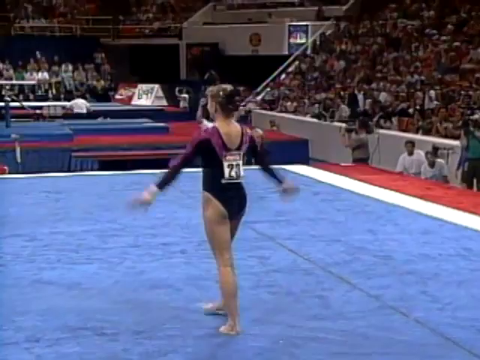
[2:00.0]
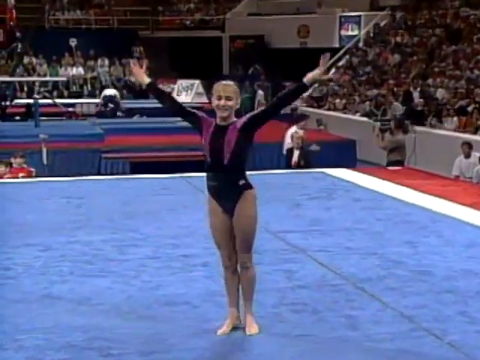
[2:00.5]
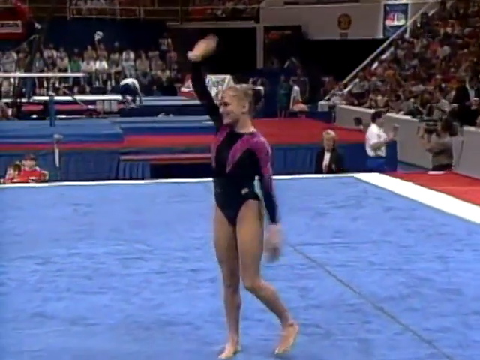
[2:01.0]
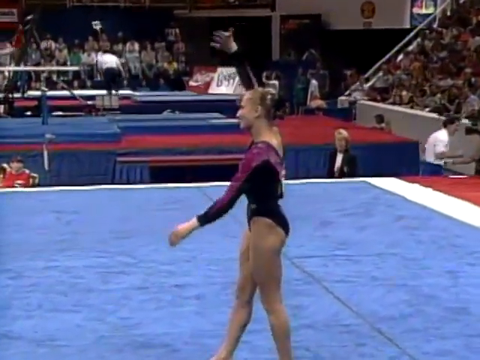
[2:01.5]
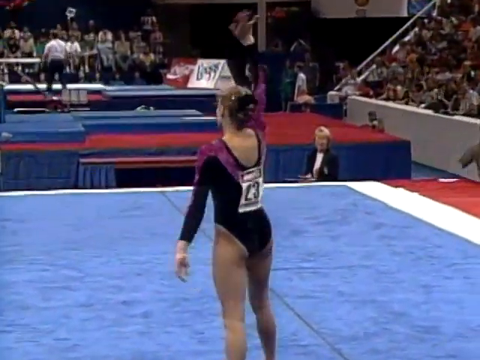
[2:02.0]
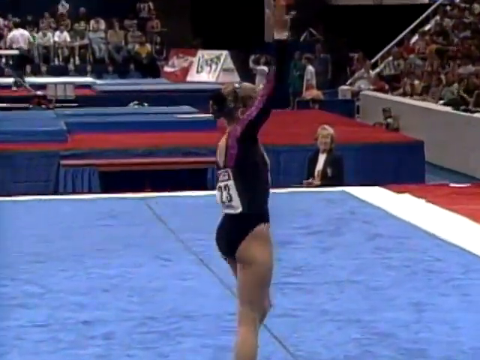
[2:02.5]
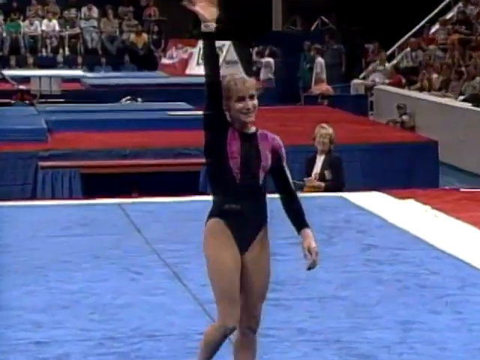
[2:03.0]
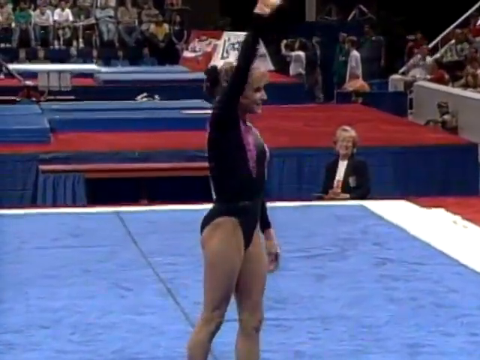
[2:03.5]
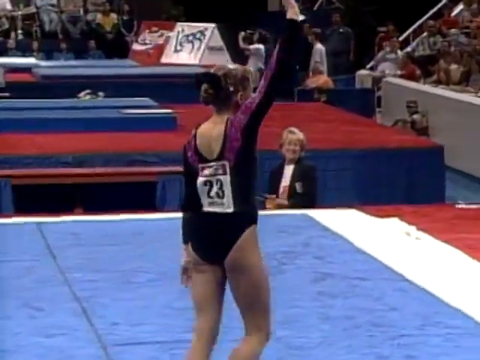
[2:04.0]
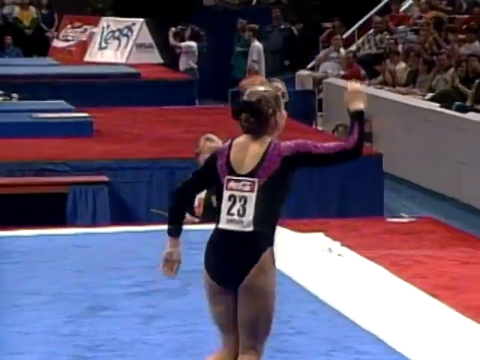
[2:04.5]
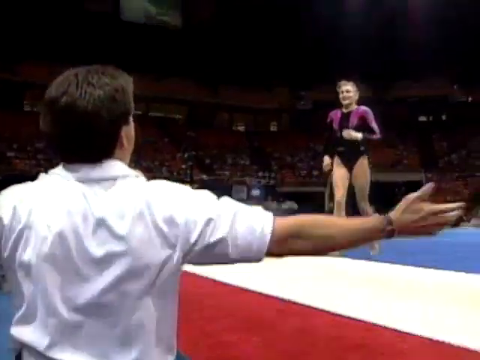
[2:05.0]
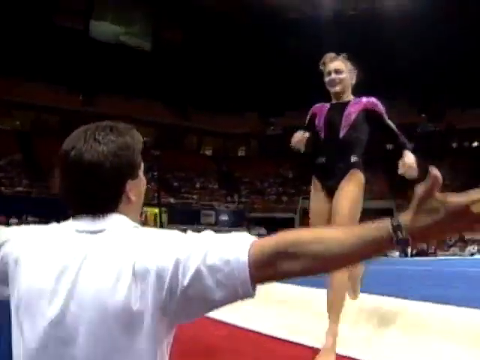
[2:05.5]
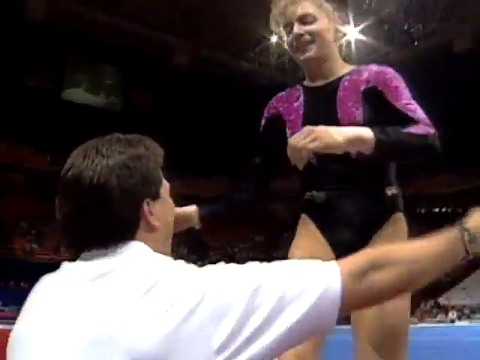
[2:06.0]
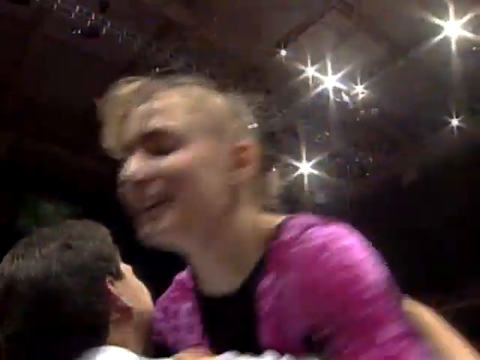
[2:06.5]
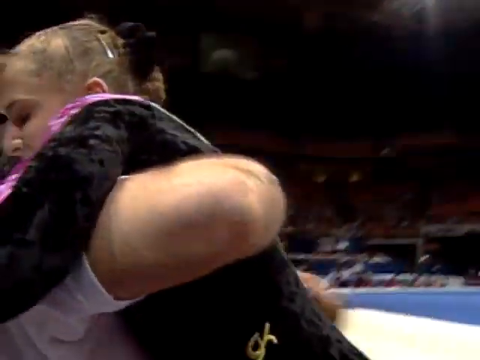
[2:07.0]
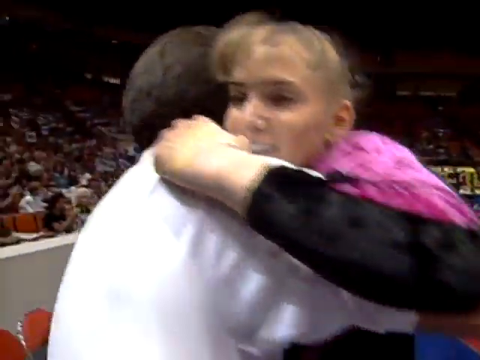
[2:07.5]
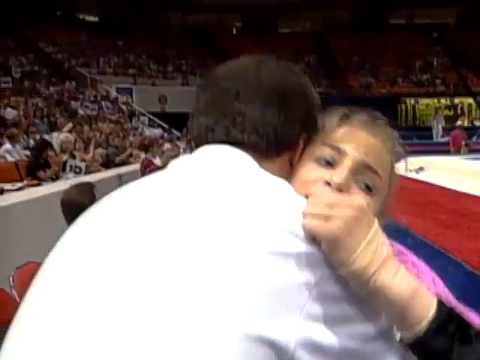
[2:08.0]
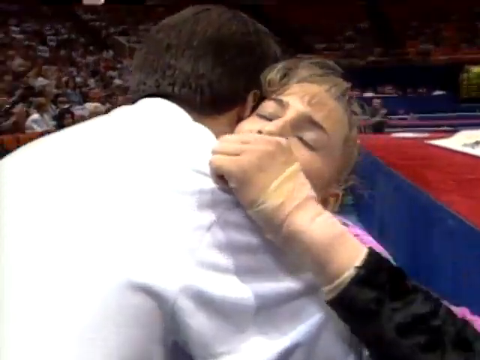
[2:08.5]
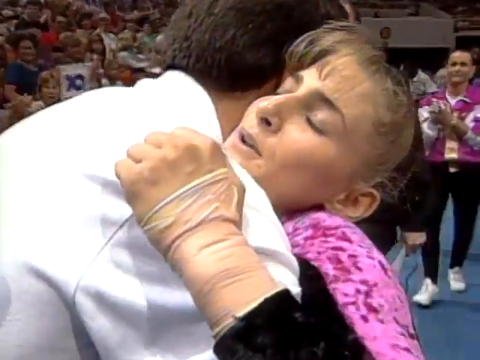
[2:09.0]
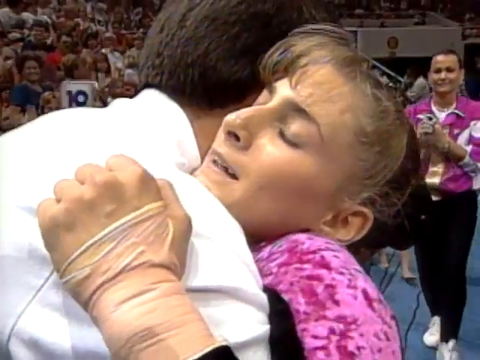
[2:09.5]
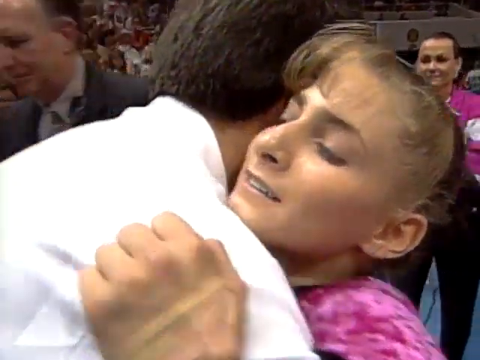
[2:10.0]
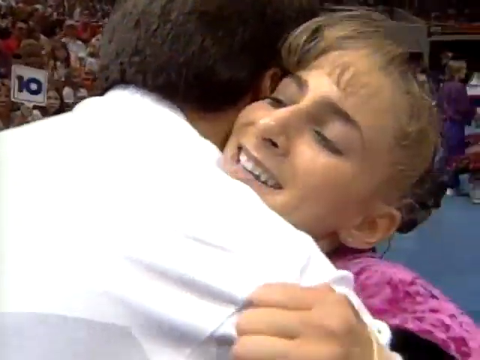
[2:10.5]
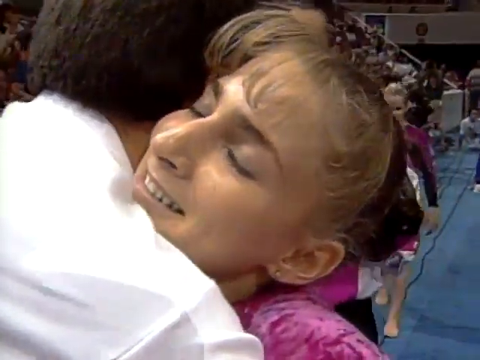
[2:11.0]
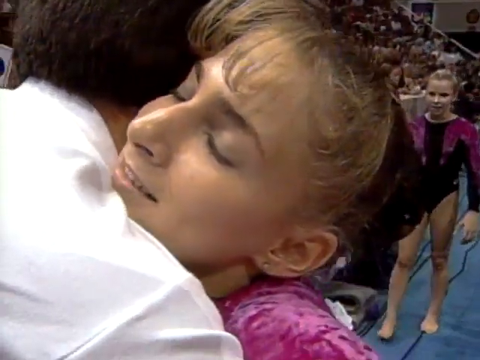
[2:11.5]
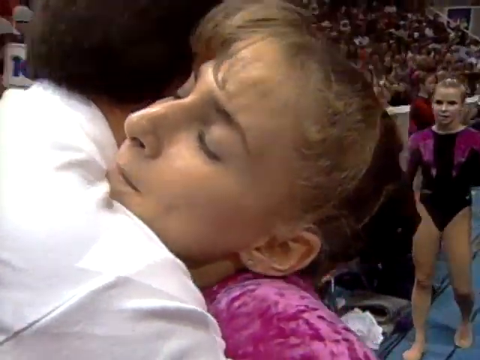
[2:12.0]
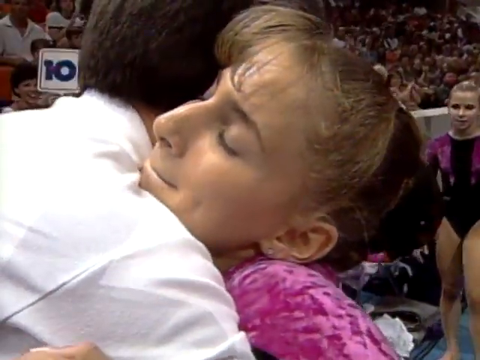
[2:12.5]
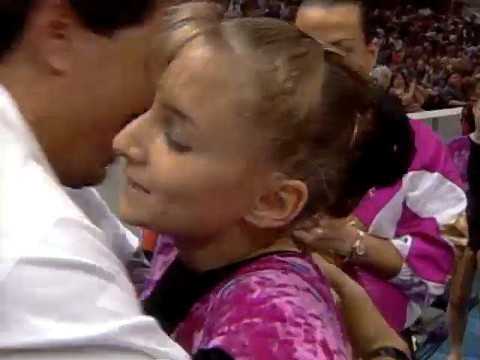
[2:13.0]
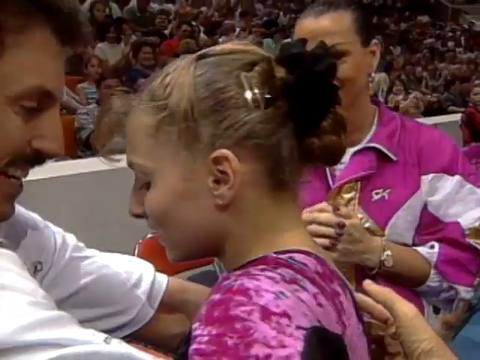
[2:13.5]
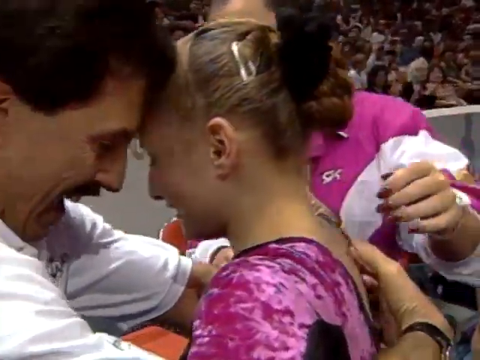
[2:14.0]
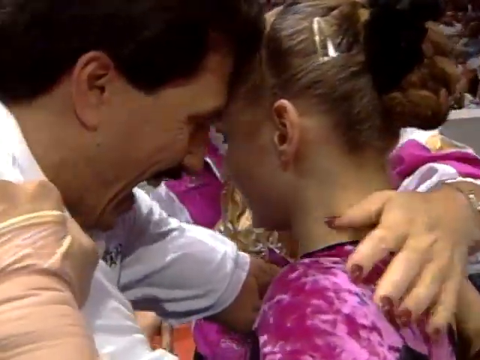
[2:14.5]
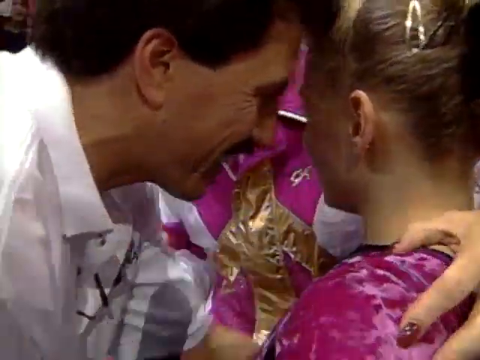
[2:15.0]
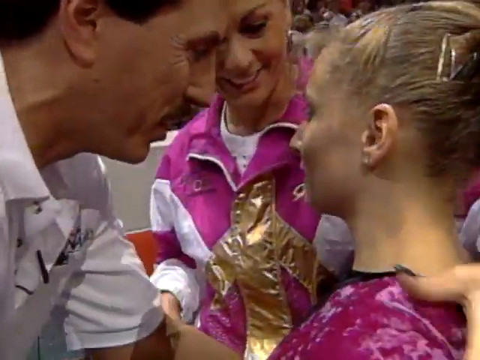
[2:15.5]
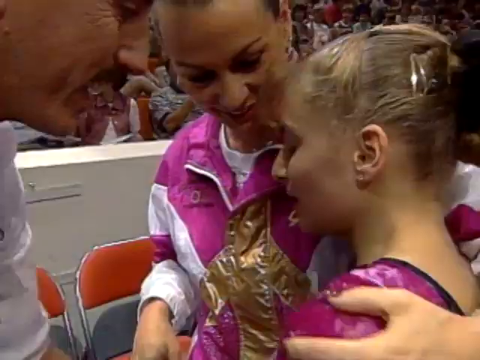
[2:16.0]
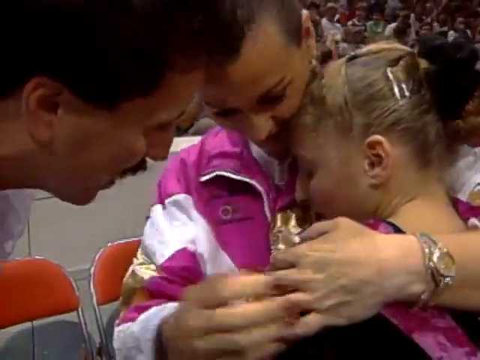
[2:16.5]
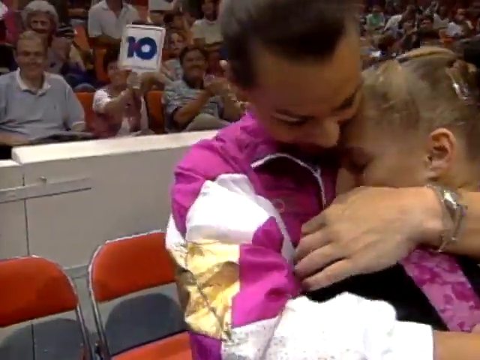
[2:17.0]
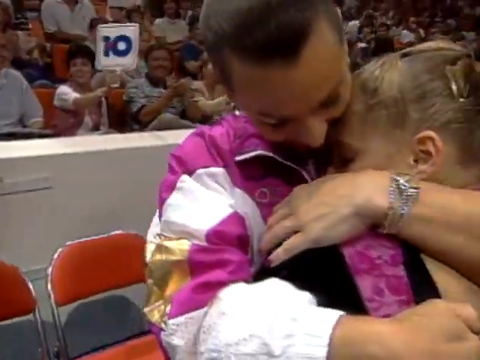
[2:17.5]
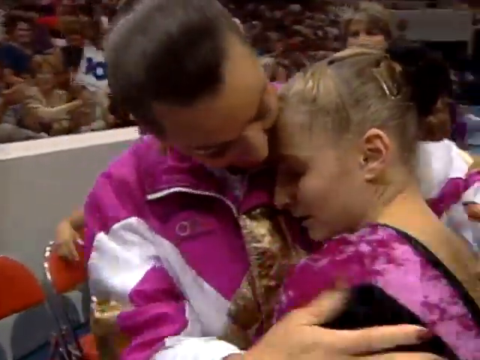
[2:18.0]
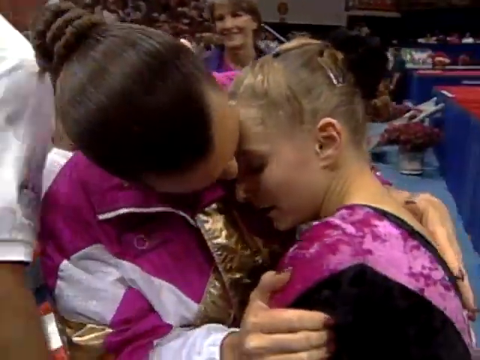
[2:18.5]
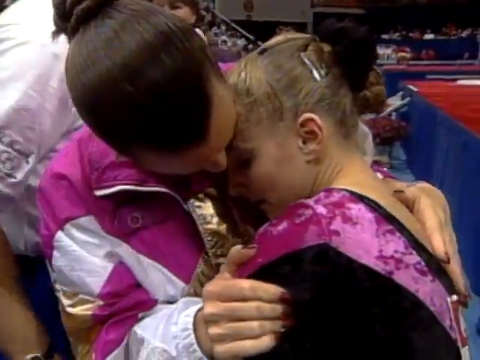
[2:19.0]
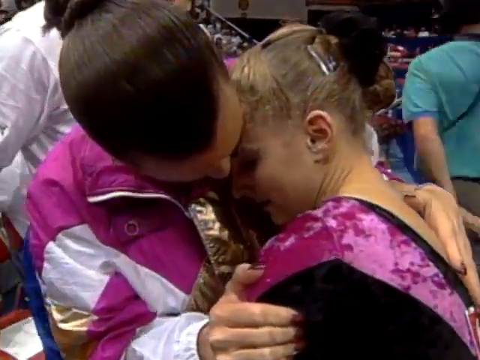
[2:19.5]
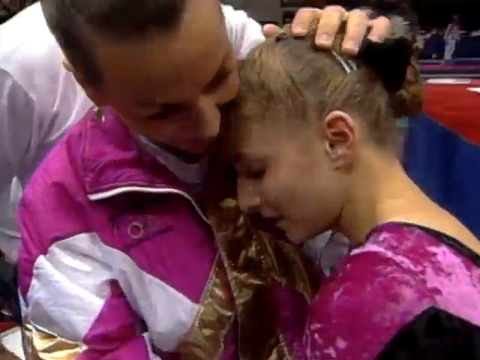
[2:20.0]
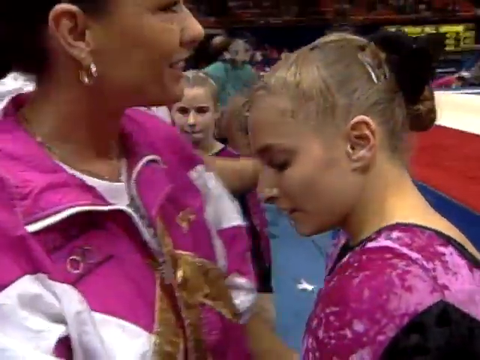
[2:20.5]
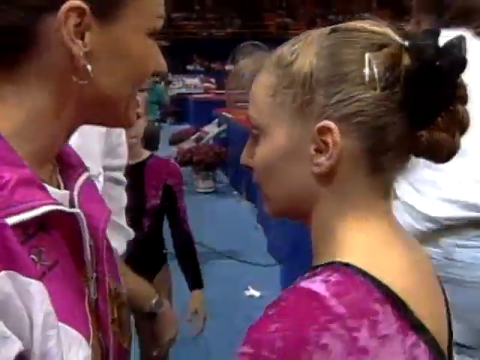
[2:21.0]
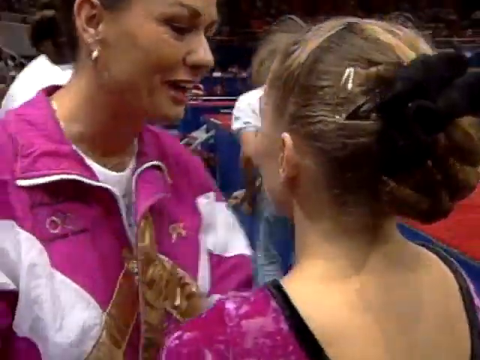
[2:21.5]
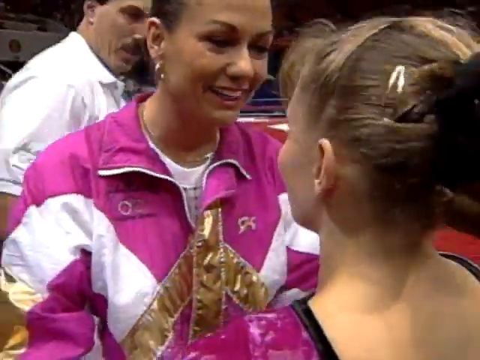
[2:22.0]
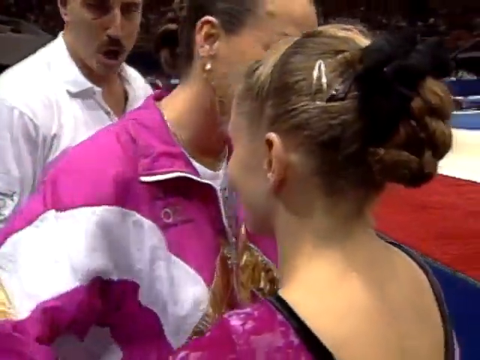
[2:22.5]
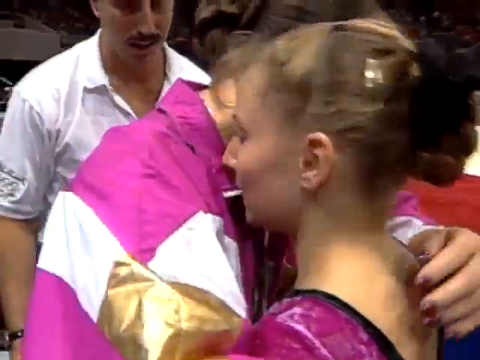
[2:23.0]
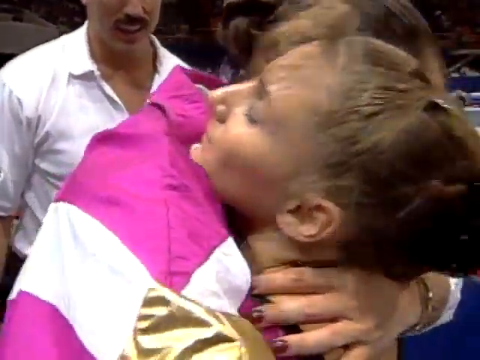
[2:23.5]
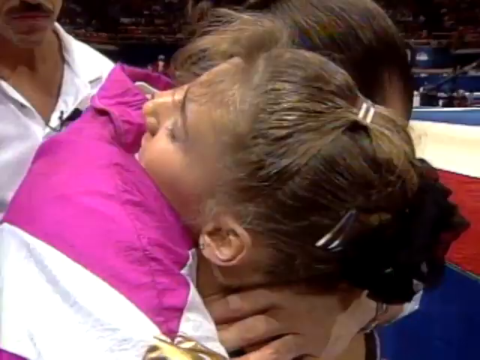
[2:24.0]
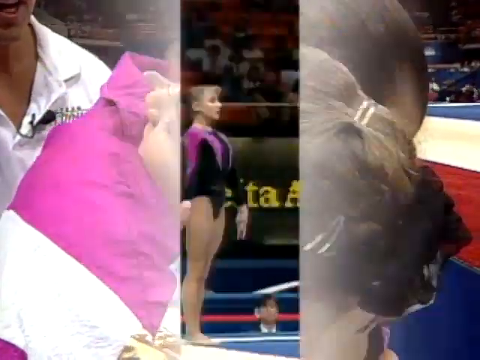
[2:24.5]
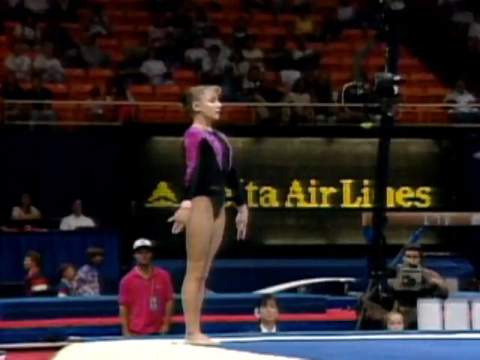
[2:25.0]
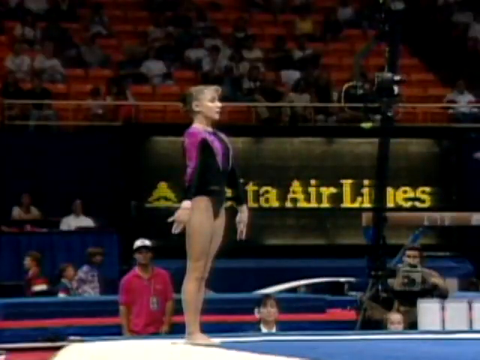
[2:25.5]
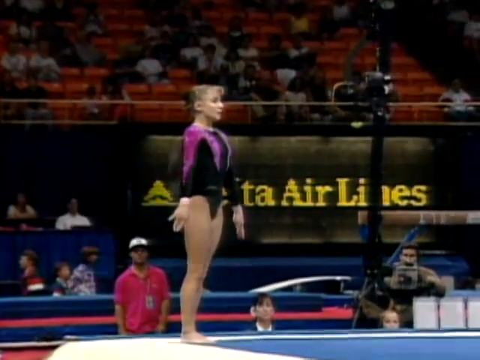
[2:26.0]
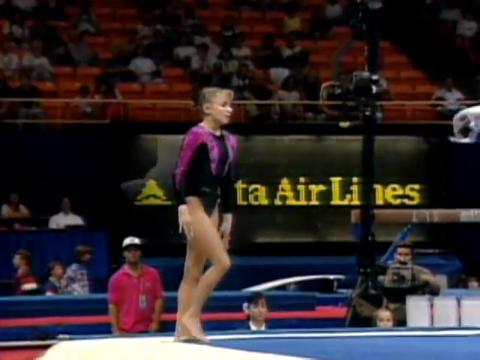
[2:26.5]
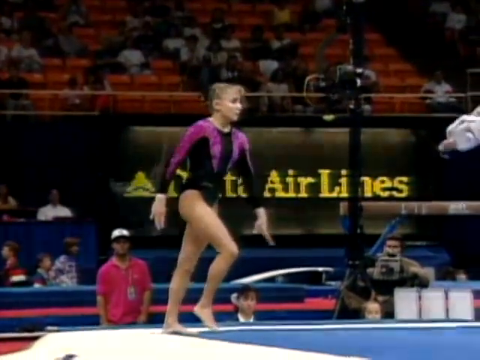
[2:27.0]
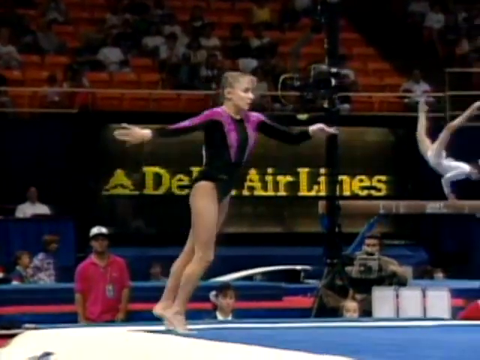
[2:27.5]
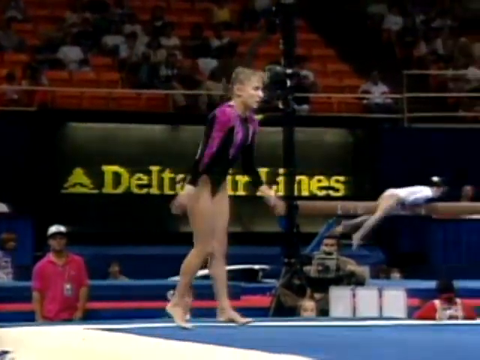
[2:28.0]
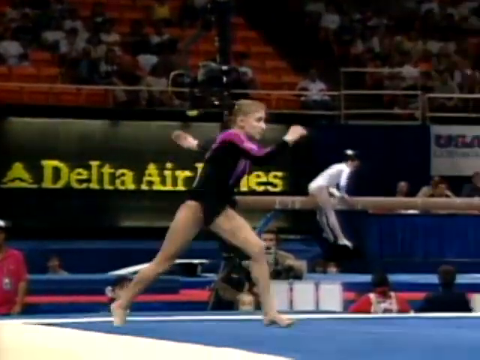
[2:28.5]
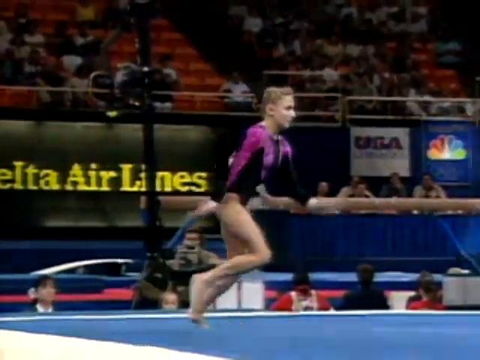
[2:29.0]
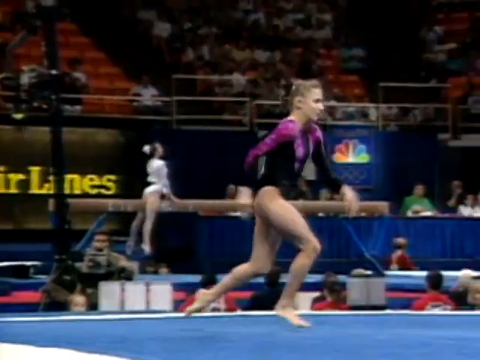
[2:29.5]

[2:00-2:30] A gymnast performs at a big gymnastics event. The NBC logo is on one of the exits, and the Coca-Cola and Legs logos are visible. The stands are full of people. The view is of the gymnast's back as she stands on the large blue mat with its thick white outline. It looks like she has just finished a routine, and she waves to the crowd. She wears a black leotard with some purple at the top, and her hair is tied up; it looks light brown, maybe dark blonde. She waves as she runs off the mat, the number 23 on her. She appears to hug her coach, a man with short hair in a white shirt, who seems to be congratulating her. Another coach walks up, and a couple of her teammates come up to hug and congratulate her. Some people in the stands hold up signs that say "10". Then there appears to be a replay of one of her stunts, and she begins to run.